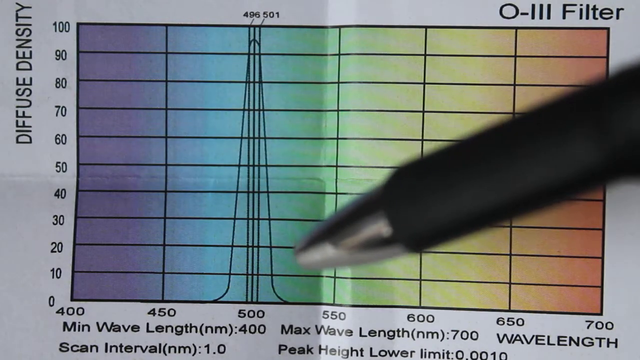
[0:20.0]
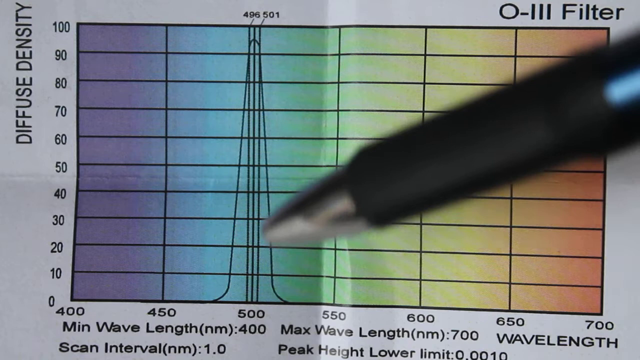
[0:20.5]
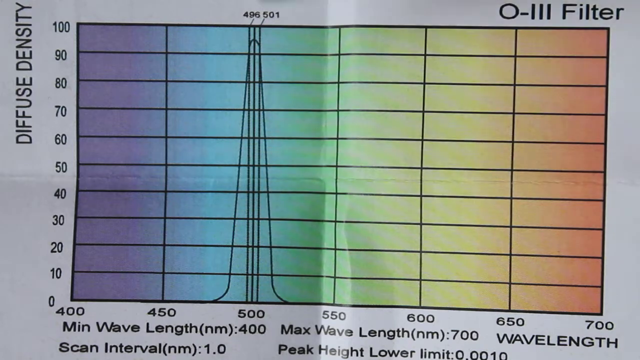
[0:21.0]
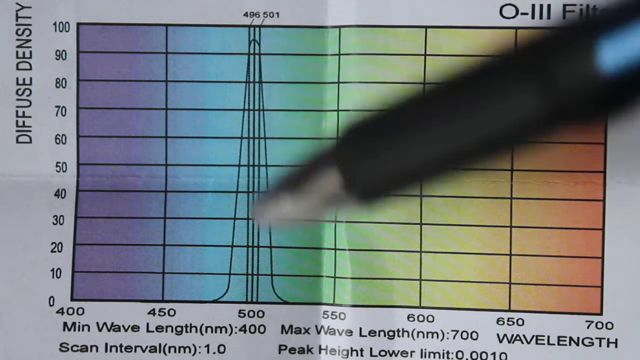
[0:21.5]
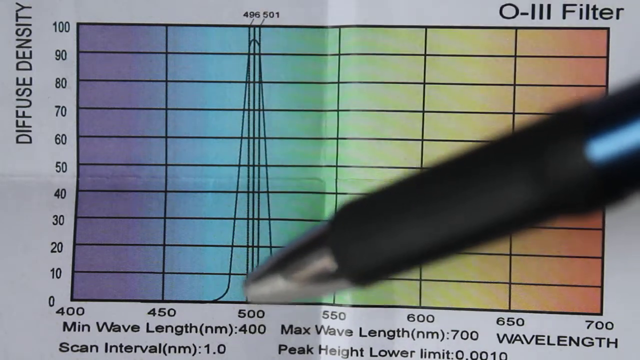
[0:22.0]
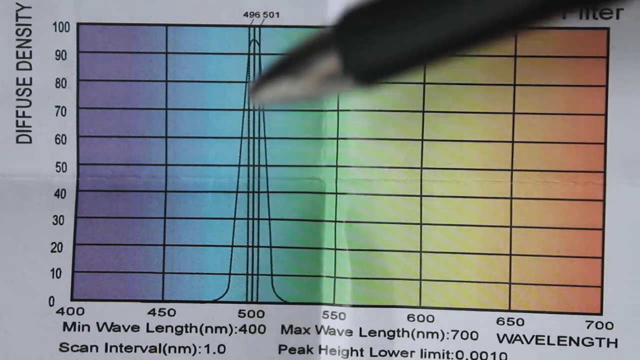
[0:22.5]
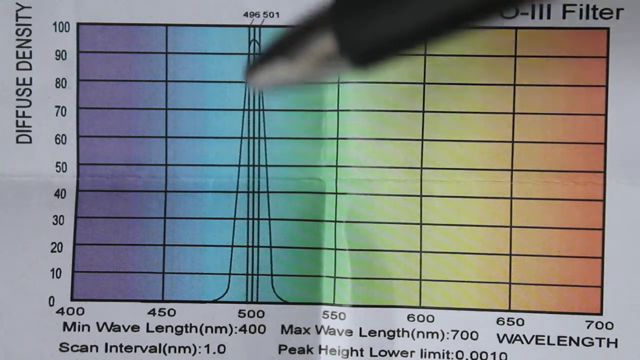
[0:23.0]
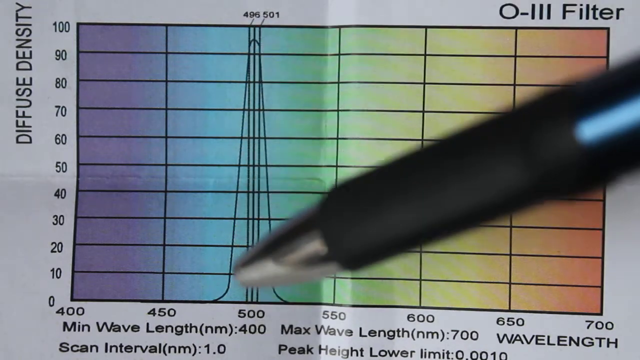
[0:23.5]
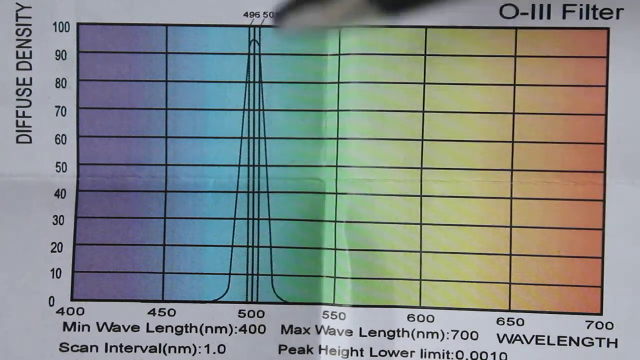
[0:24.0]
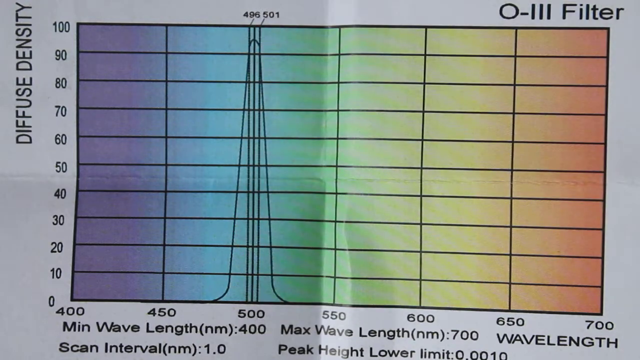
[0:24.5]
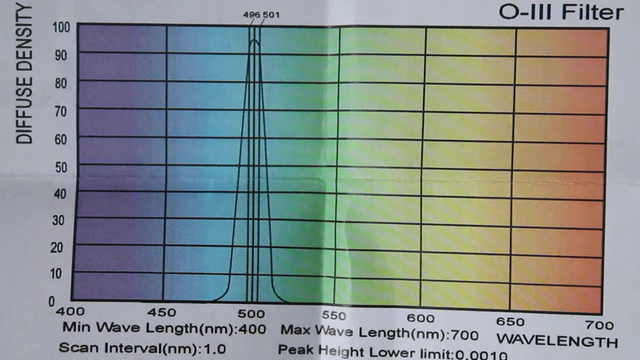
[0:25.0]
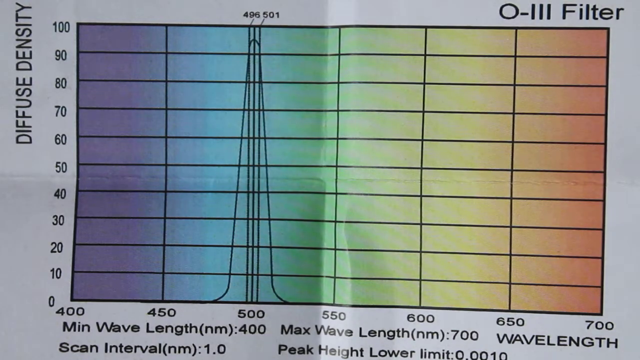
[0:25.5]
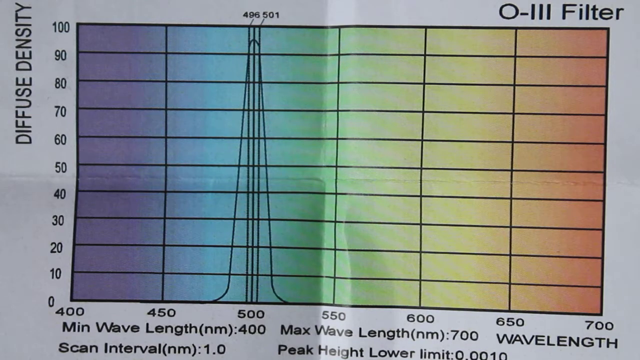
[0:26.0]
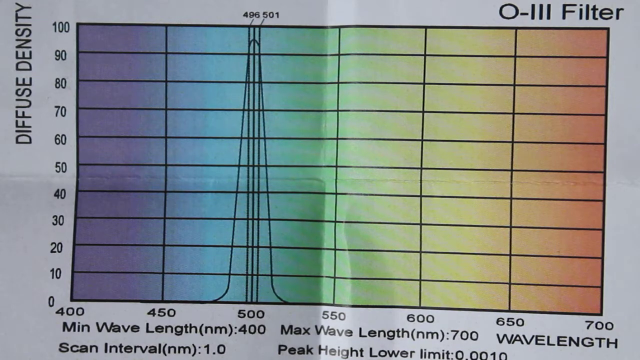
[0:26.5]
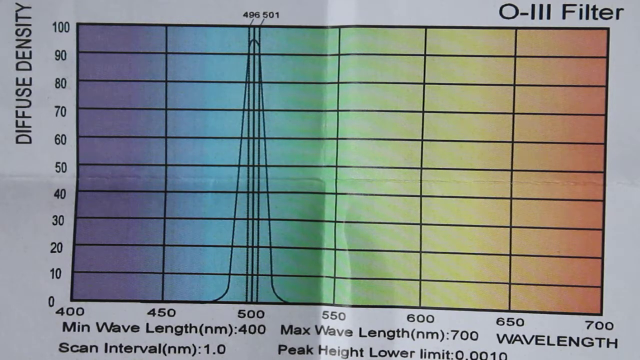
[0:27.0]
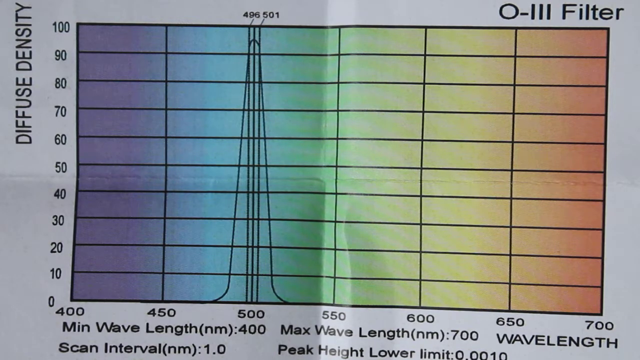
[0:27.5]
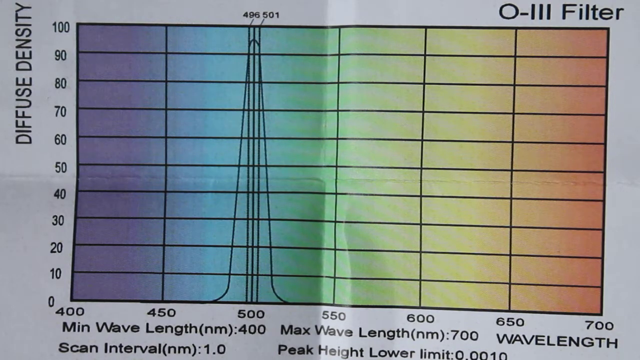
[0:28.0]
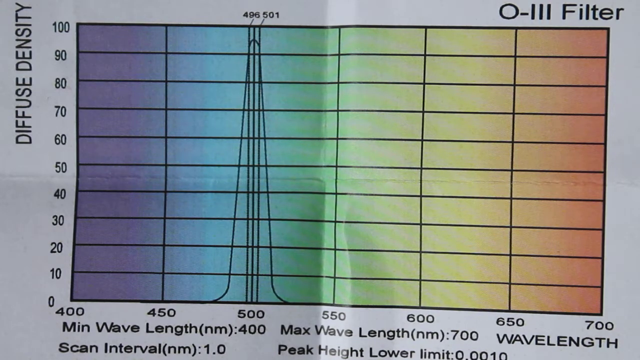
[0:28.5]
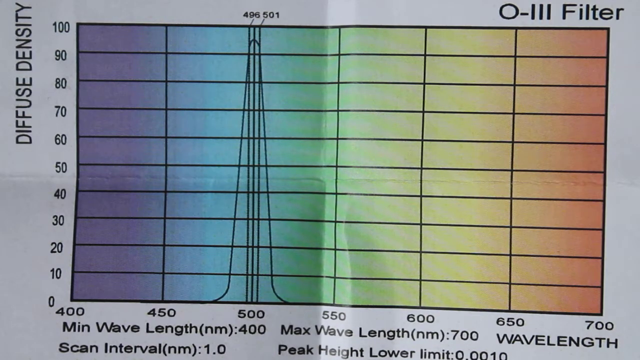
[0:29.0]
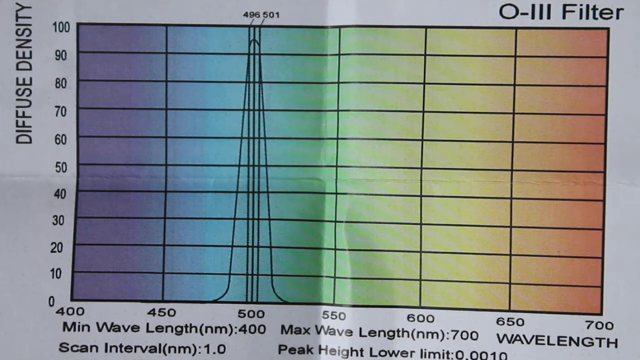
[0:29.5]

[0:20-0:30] The person continues pointing the pen at certain angles of the graph. The graph stays exactly the same: the upper right-hand corner says "O-LLL filter", the left side is labeled "diffuse density" from top to bottom with numbers from 0 to 100 in increments of 10, and the lower side shows the wavelength from left to right with numbers from 400 to 700 in increments of 50. Not much else happens. The video is rectangular in shape.